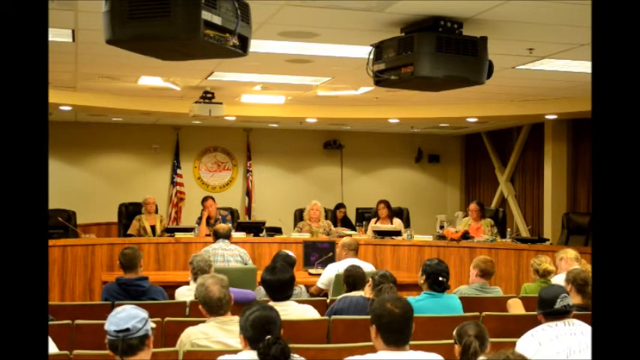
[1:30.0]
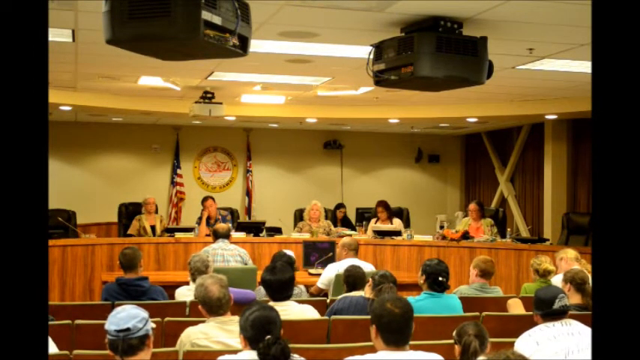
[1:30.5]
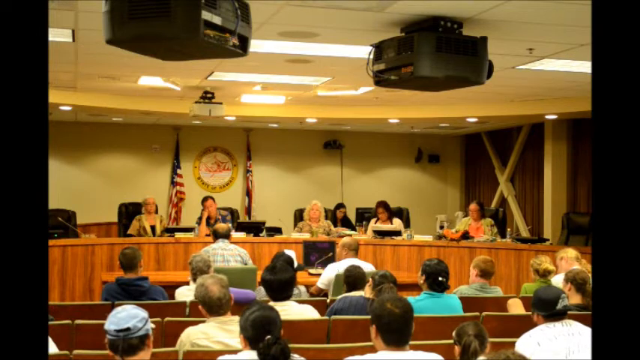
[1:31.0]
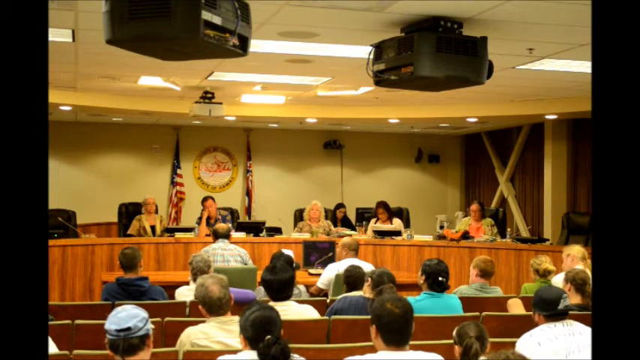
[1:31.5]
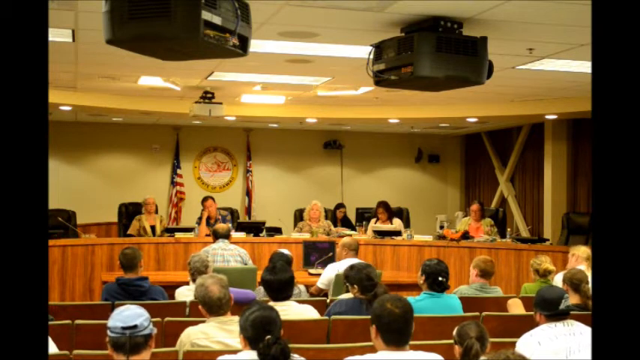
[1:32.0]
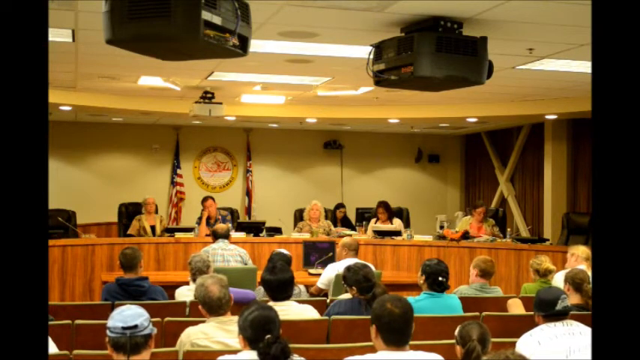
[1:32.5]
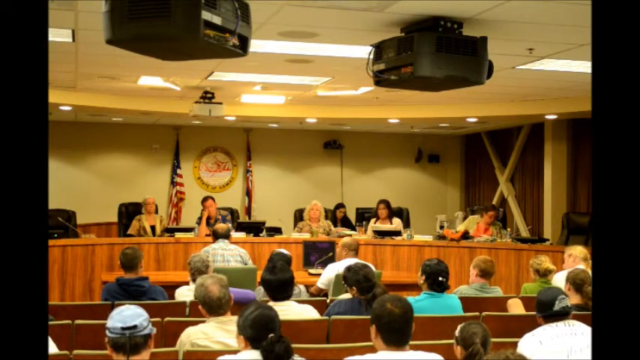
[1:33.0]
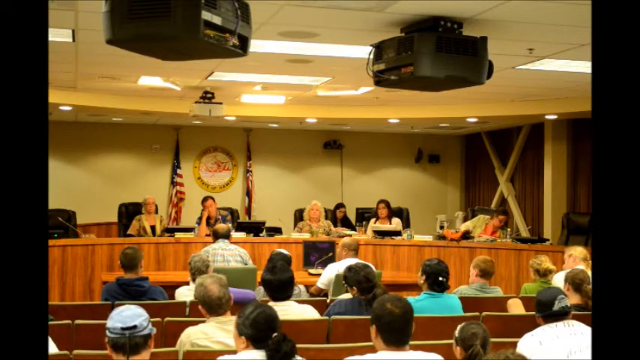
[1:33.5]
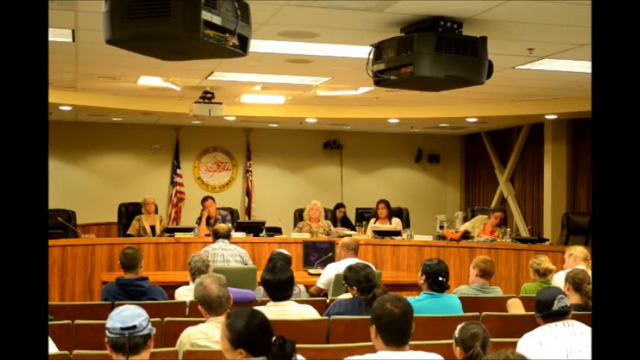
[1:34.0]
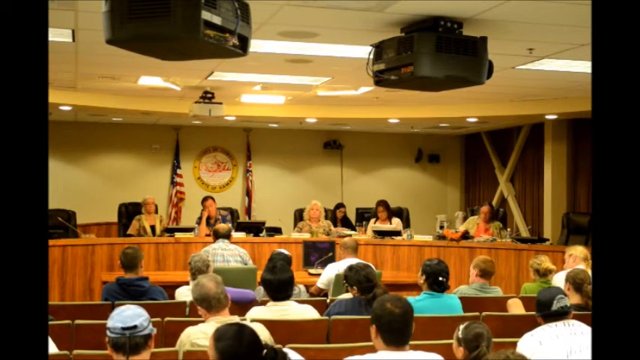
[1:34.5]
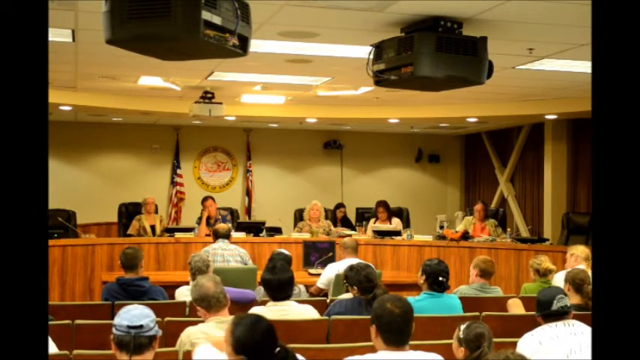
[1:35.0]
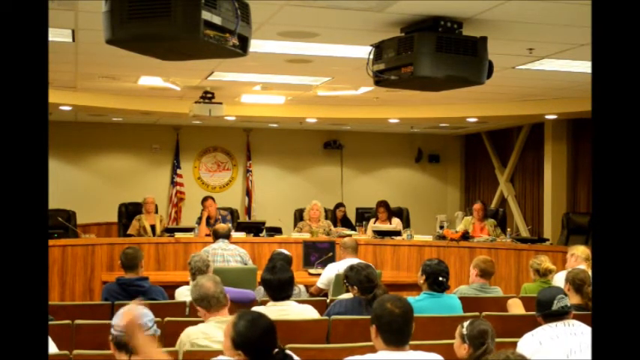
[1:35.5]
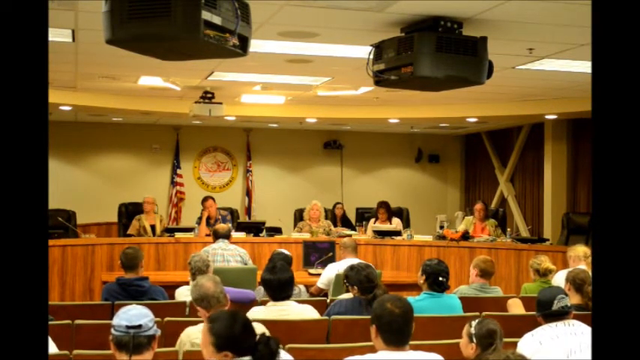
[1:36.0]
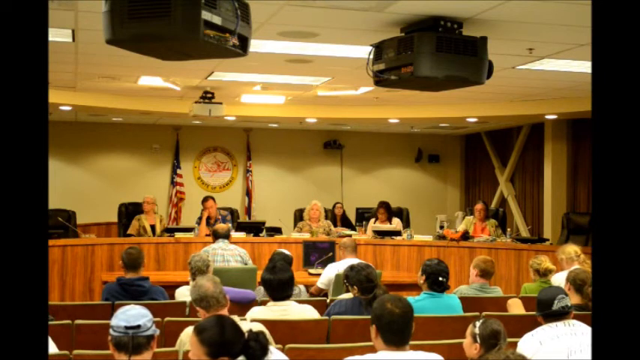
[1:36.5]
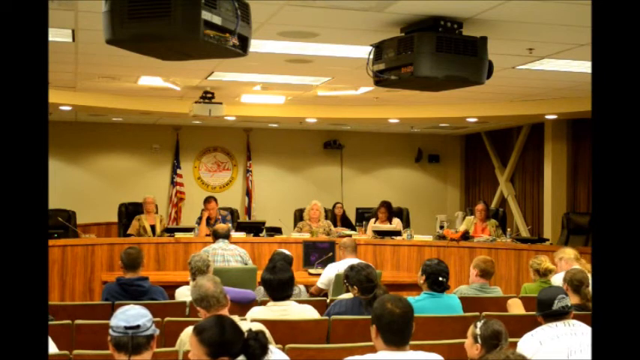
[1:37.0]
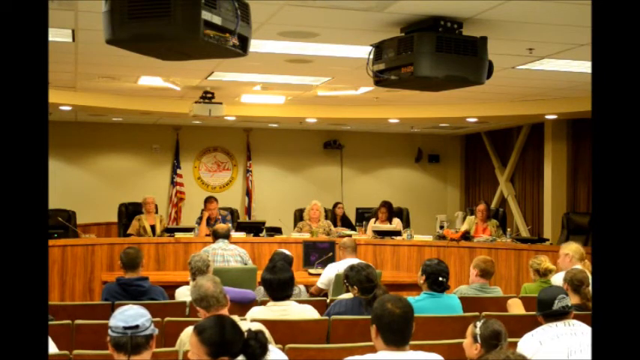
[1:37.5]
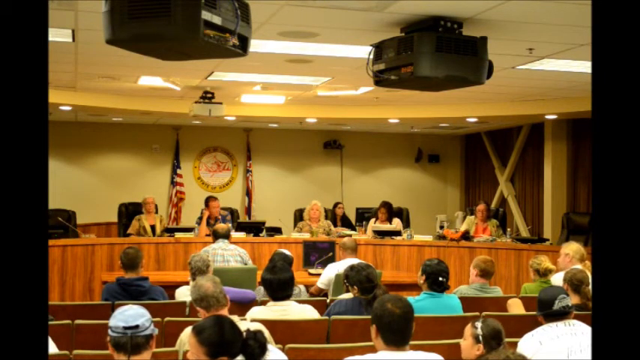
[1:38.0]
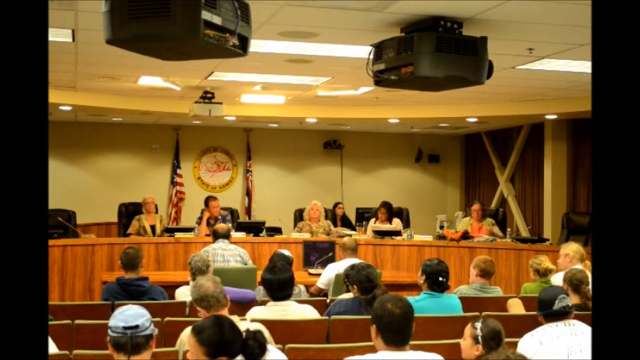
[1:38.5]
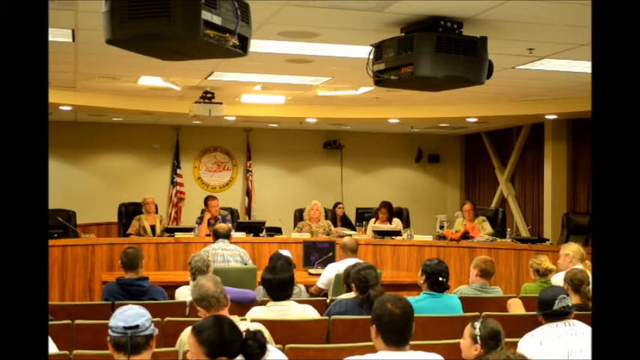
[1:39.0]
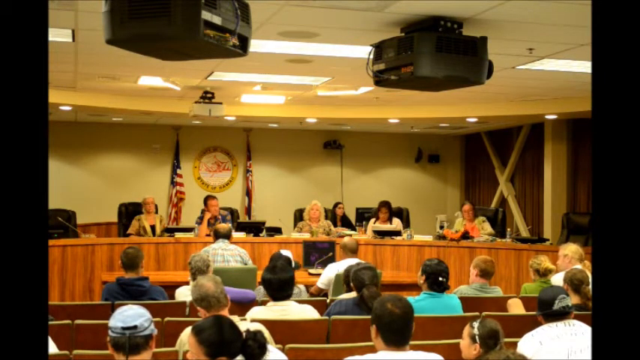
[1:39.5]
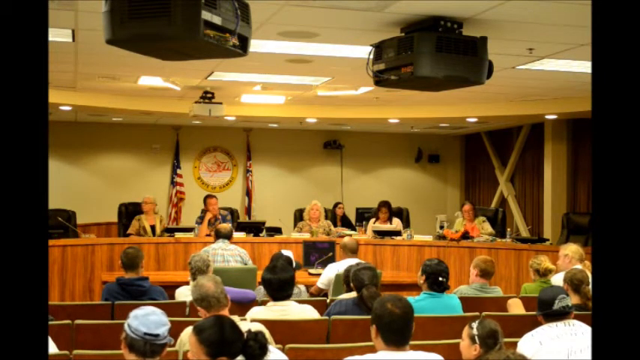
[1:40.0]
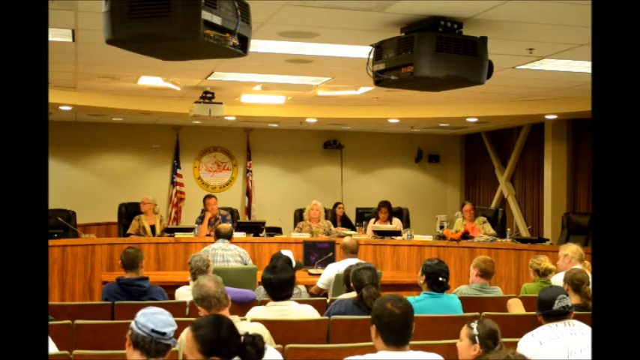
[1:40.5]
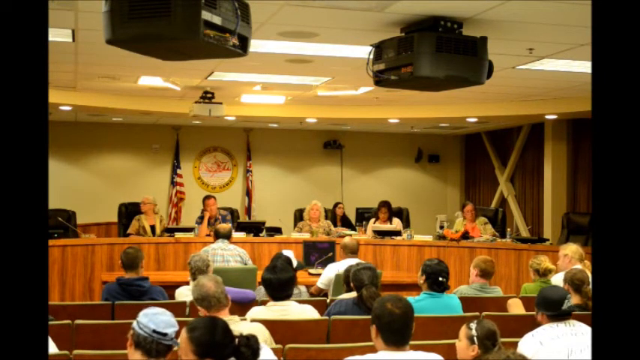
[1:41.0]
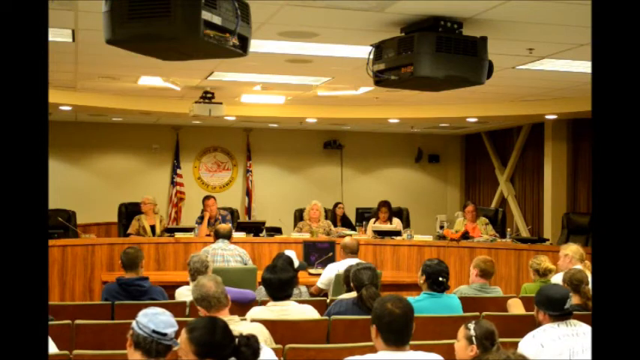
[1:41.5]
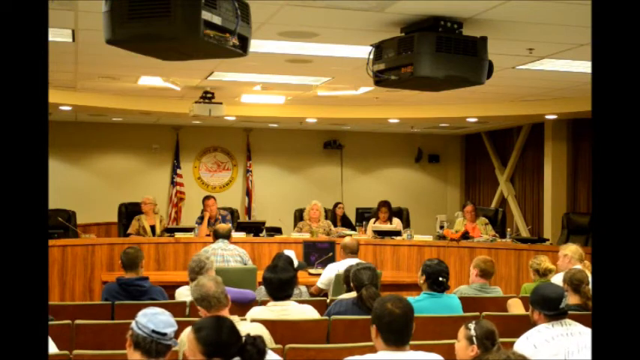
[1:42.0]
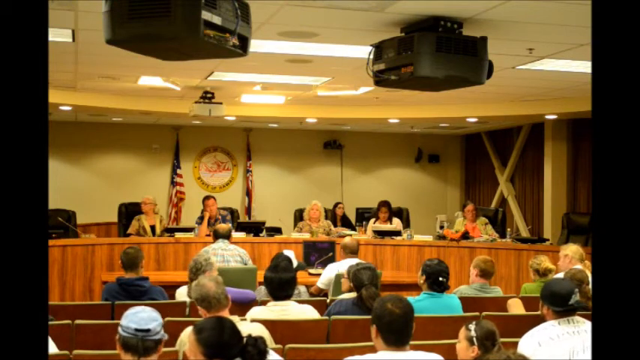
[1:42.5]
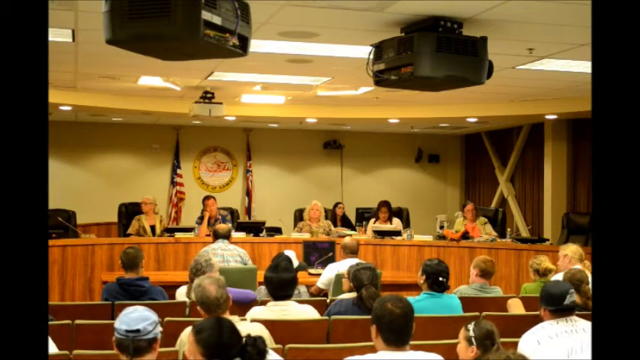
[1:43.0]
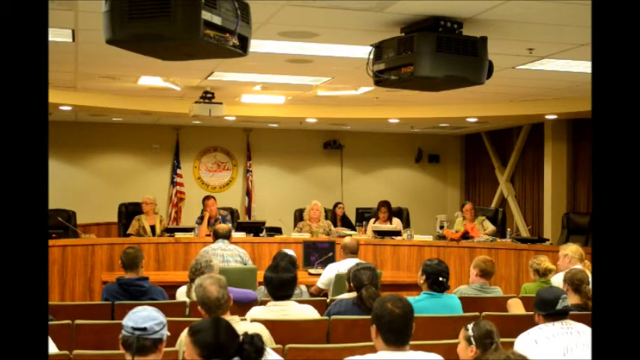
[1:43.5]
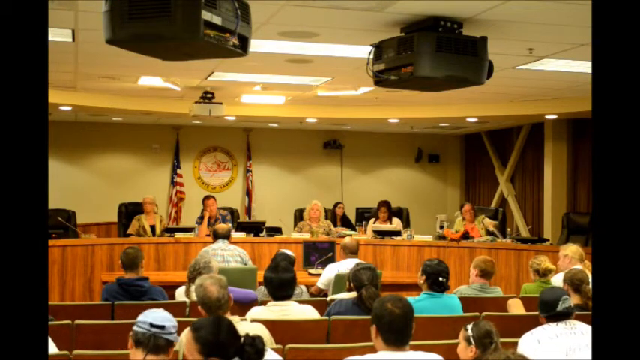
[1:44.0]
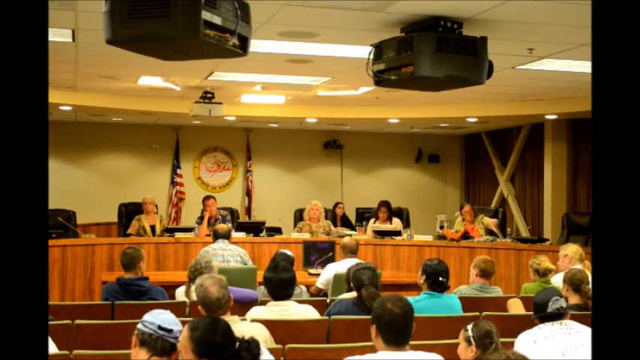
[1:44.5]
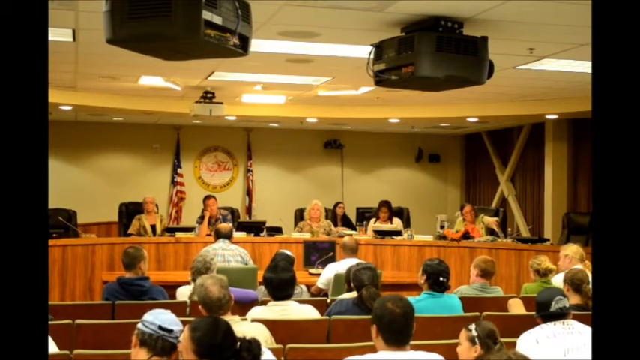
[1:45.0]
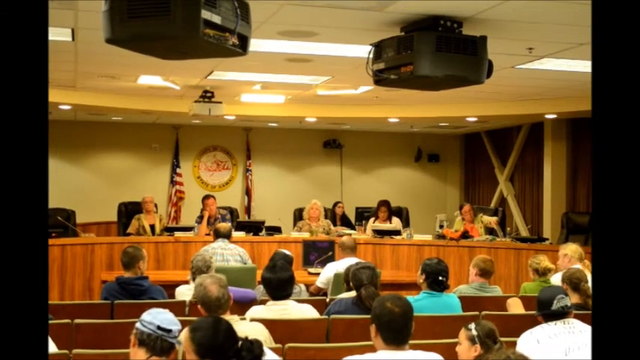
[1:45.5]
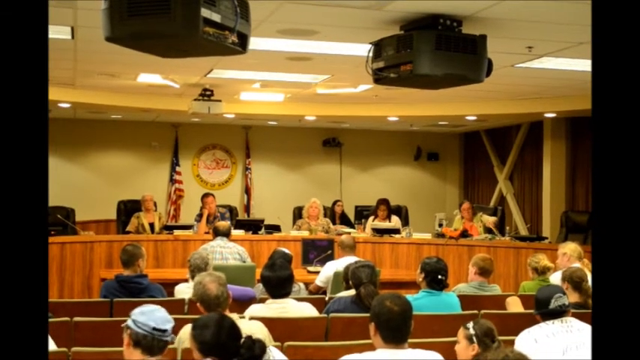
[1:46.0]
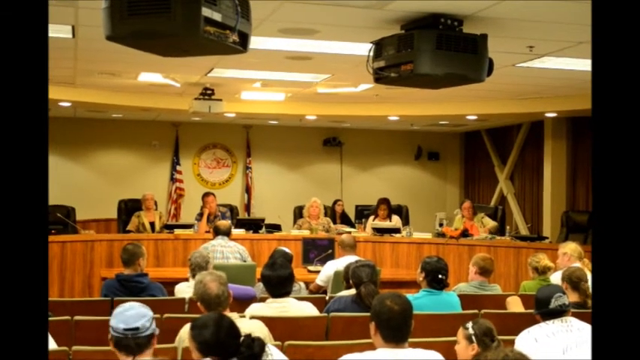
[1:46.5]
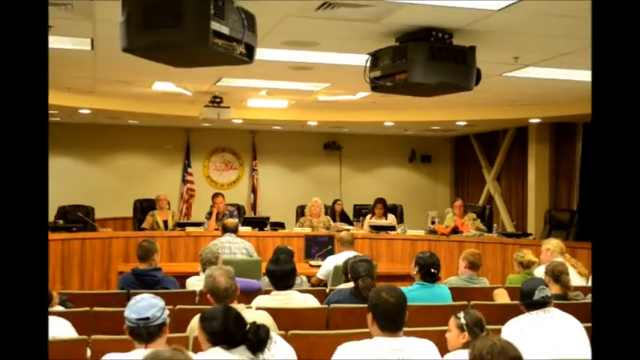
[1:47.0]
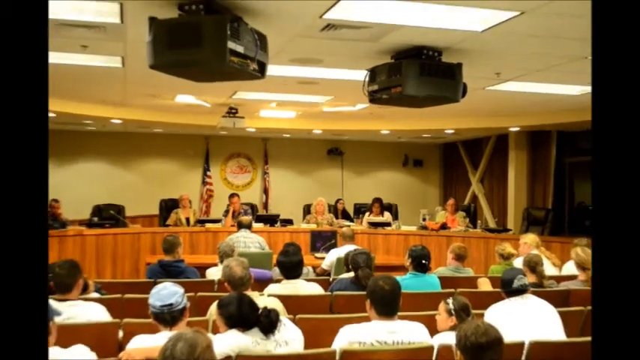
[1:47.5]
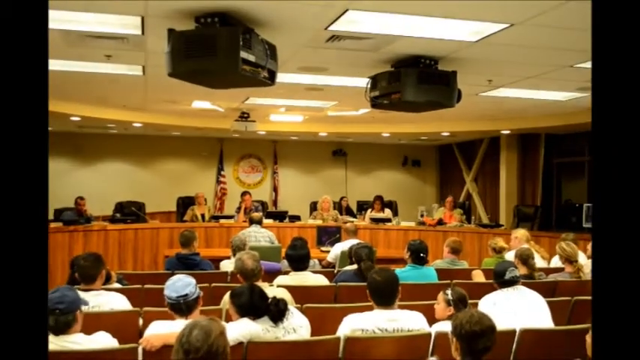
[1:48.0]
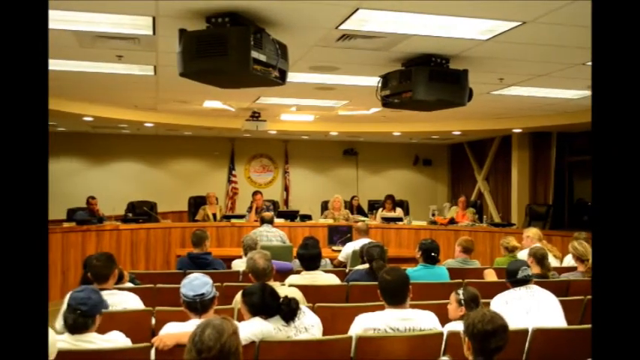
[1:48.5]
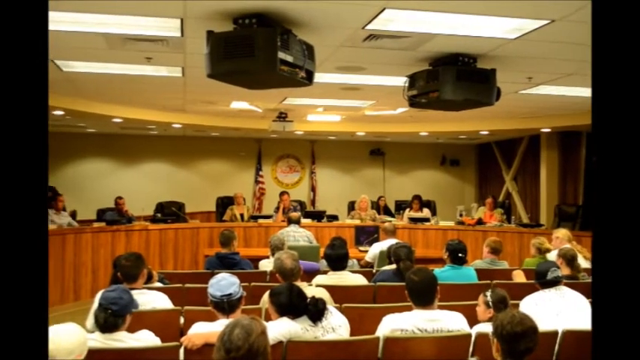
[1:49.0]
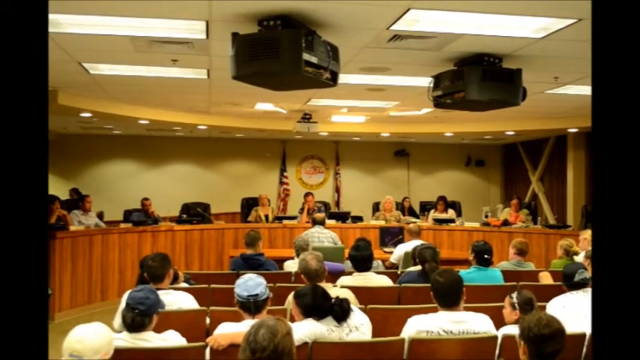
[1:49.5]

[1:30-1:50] The camera moves around the room without focusing on any particular action. A man who looks like he is falling half asleep sits with his head resting on his hand.